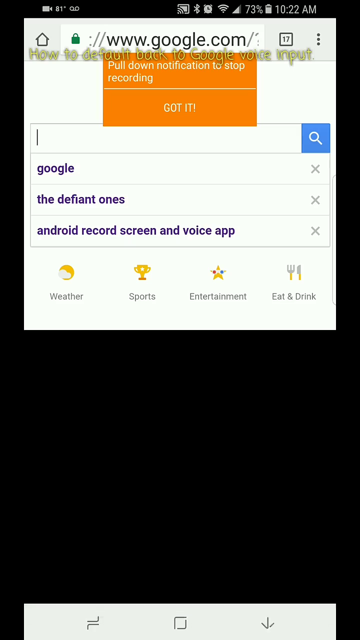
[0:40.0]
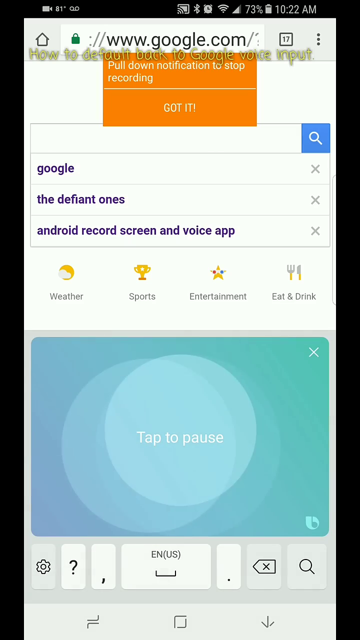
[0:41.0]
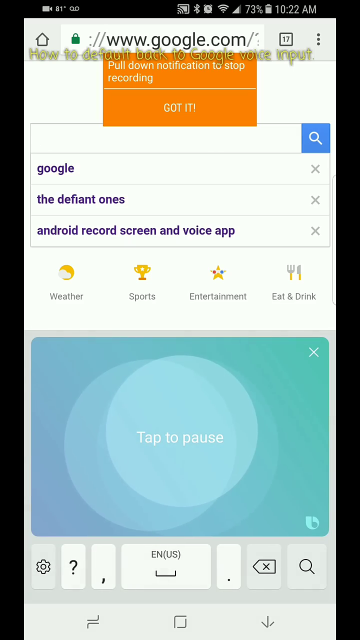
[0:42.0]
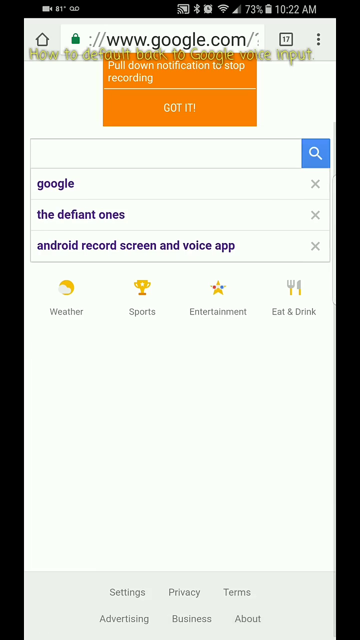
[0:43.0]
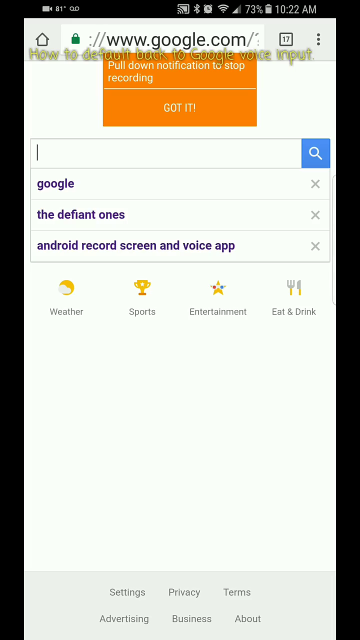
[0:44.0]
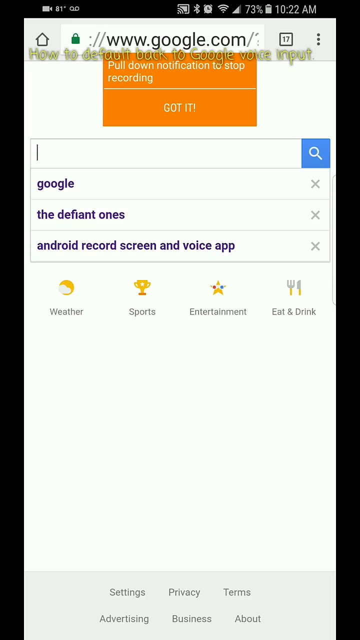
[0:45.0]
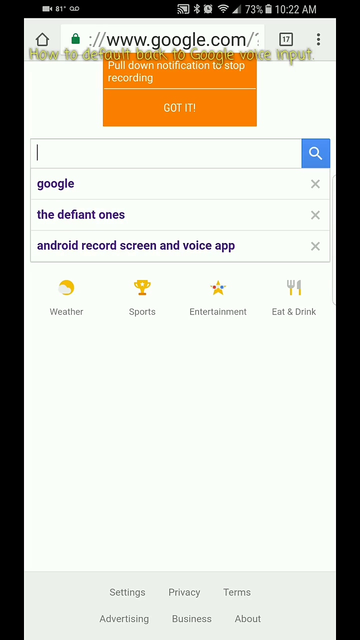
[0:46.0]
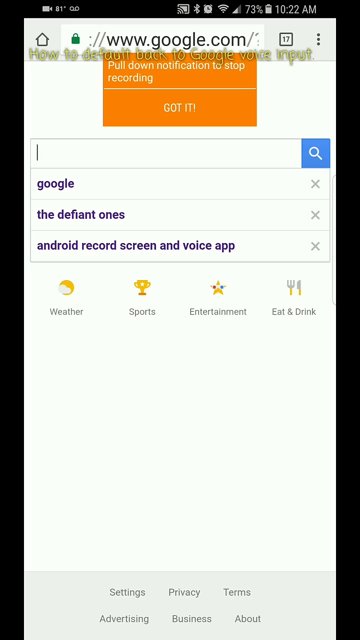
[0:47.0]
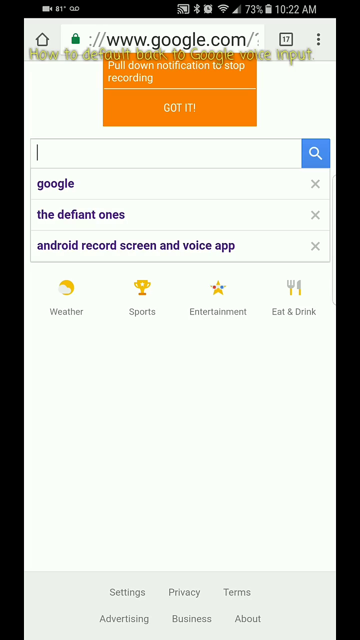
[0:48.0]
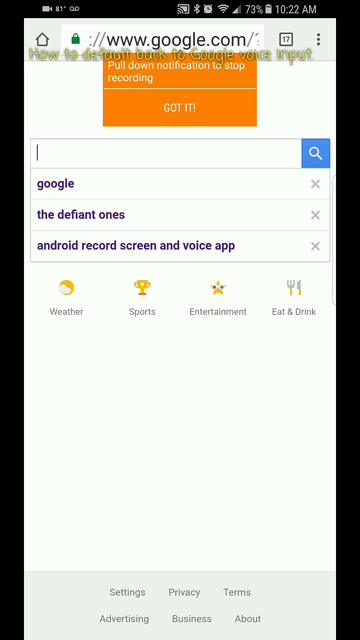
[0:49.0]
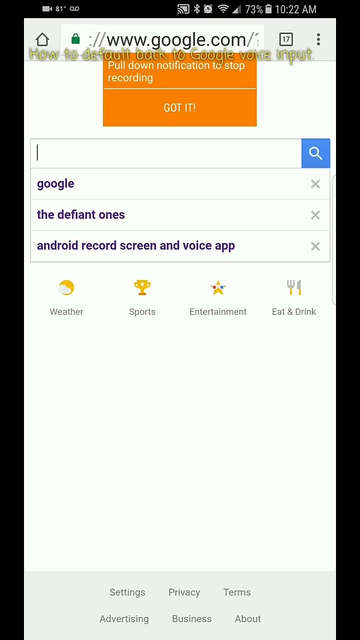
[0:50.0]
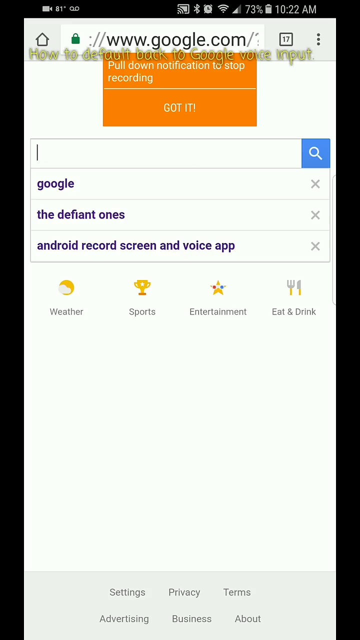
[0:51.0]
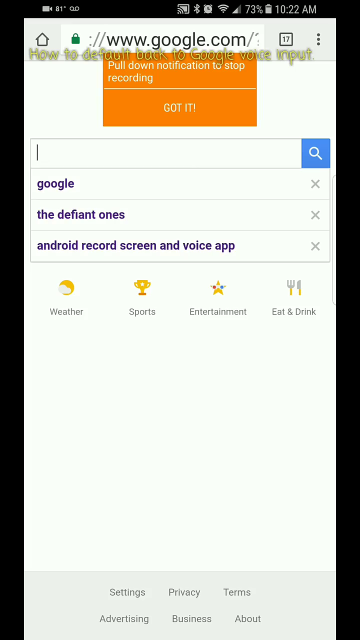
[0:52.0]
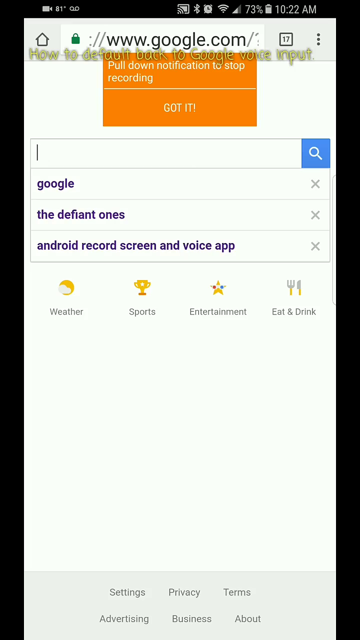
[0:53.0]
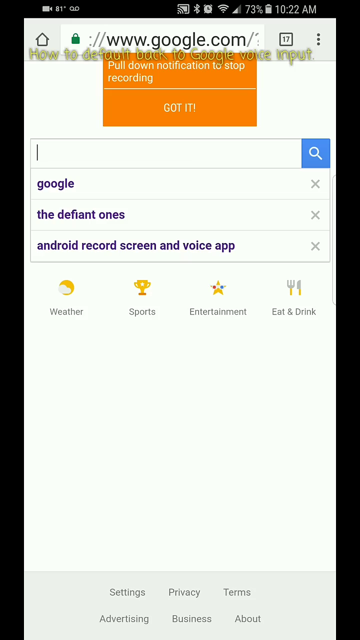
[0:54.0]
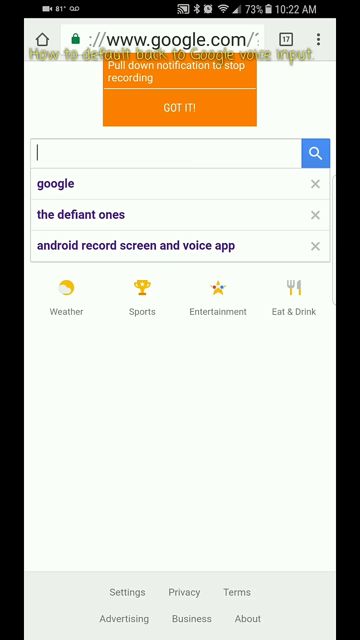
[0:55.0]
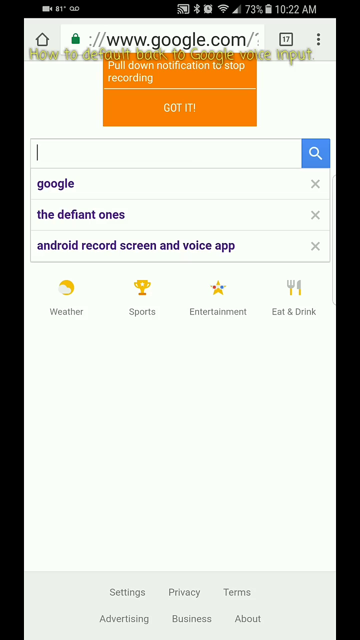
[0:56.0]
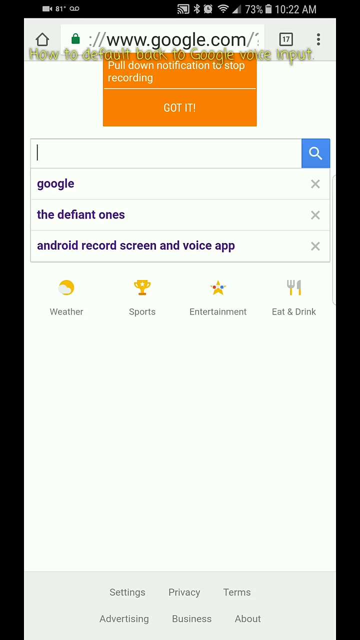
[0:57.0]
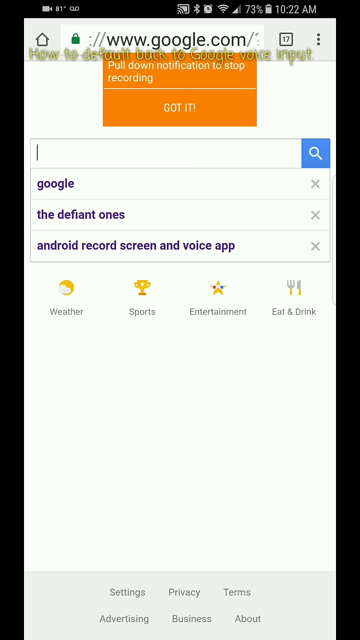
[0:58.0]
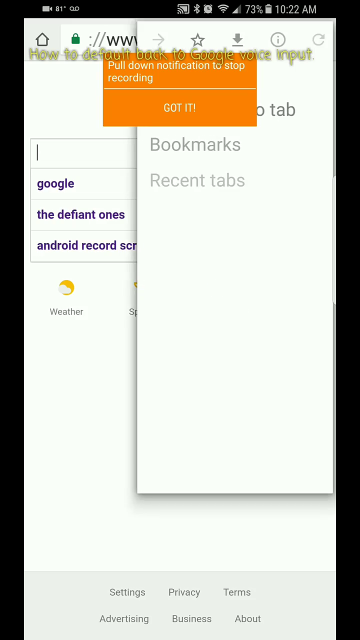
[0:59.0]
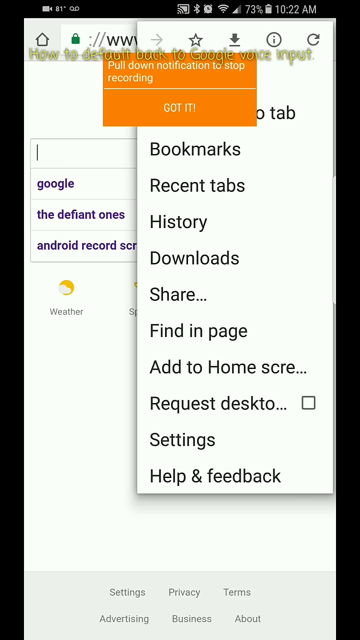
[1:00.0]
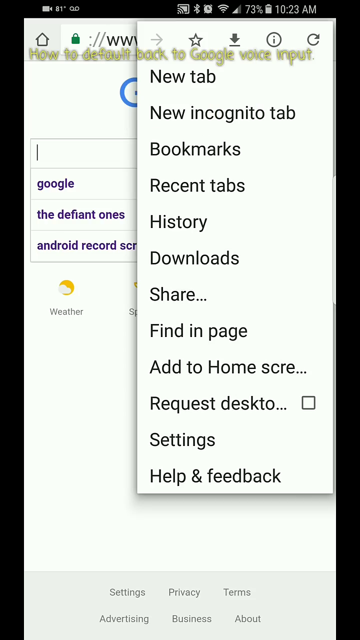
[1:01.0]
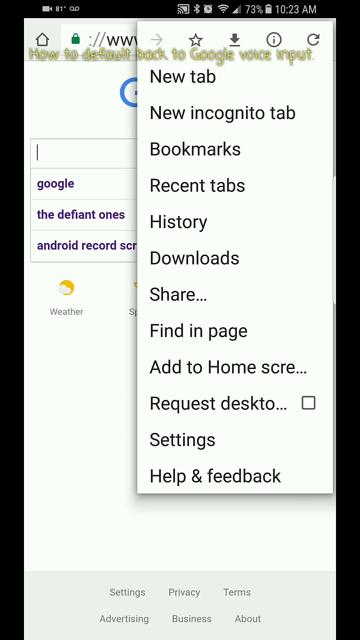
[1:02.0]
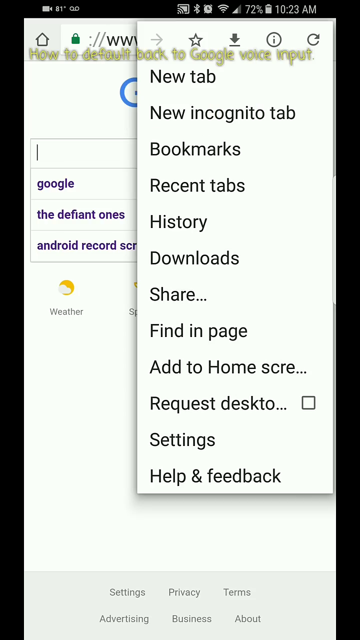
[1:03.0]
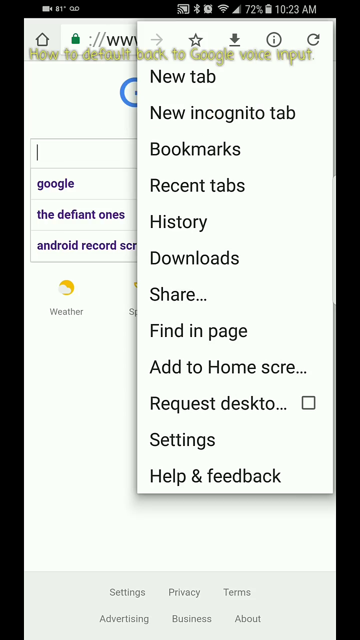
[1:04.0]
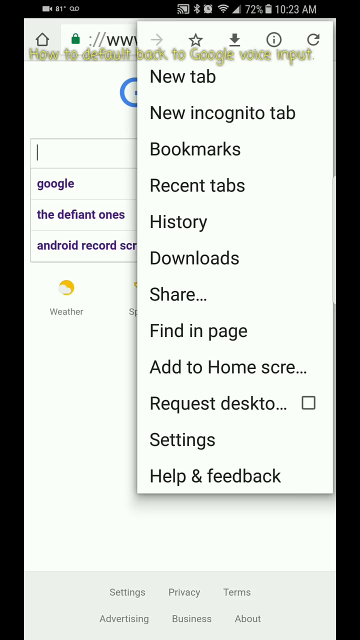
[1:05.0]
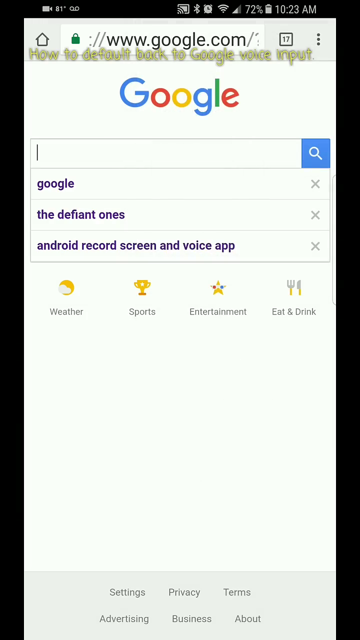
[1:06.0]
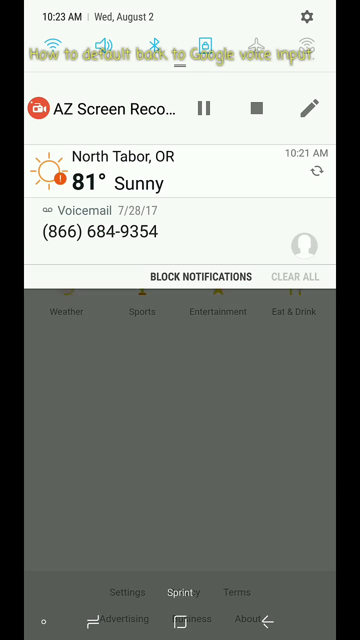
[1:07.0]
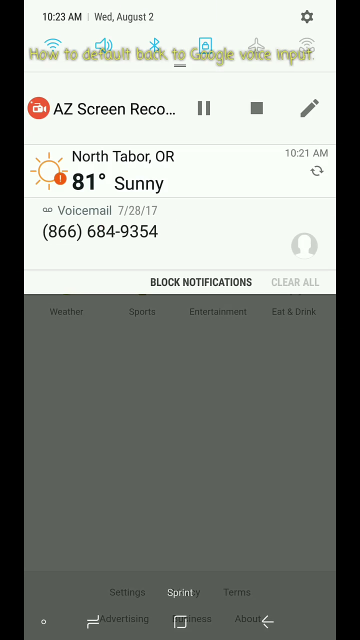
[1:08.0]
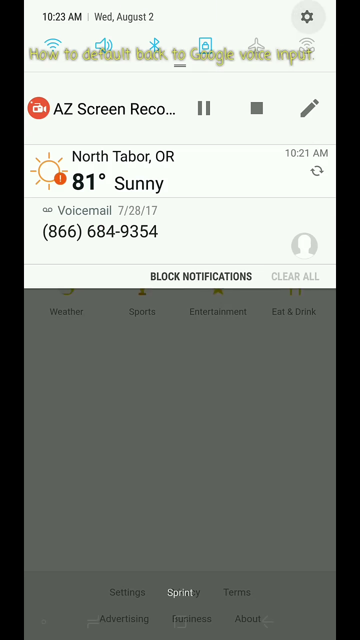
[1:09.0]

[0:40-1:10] As the cursor keeps blinking, a blue box replaces the keyboard at the bottom, seemingly for voice-to-text, with "tap to pause" centered in it. There are two translucent circles, a smaller one over the text and another behind it, a white X at the top right to exit, and at the bottom a settings button, a question mark, commas, and a few other buttons. It disappears, leaving a white area while the cursor keeps blinking. At the very bottom is a gray area with darker gray text reading "settings privacy in terms", right beneath where the voice box was. The user goes to the top and clicks the three dots, opening a list that includes "New Tab", "New Incognito", "Bookmarks", and "Recent Tabs", among other items. A drop-down then appears showing a screen recording in progress with pause and stop controls, along with the weather, a voicemail message, and notifications.